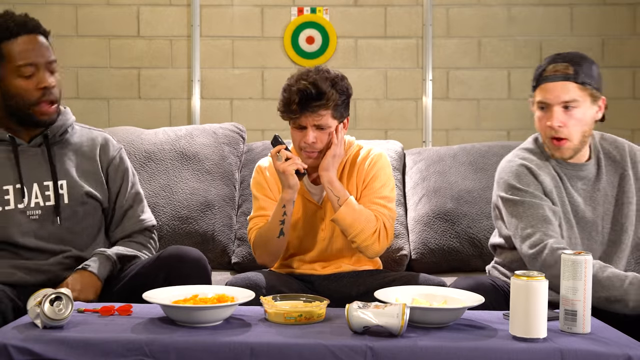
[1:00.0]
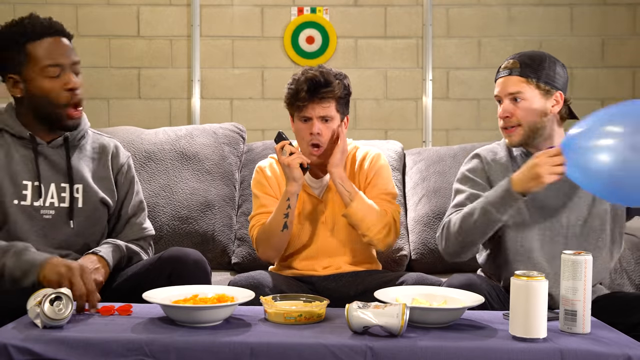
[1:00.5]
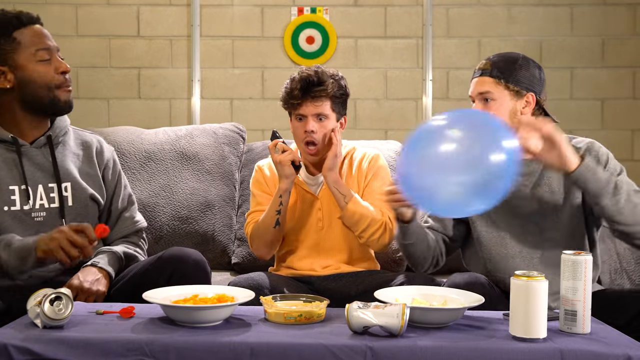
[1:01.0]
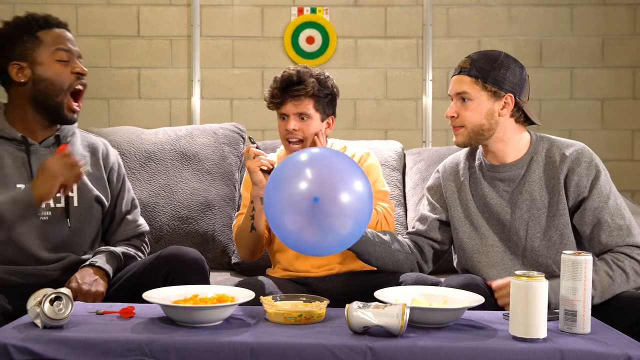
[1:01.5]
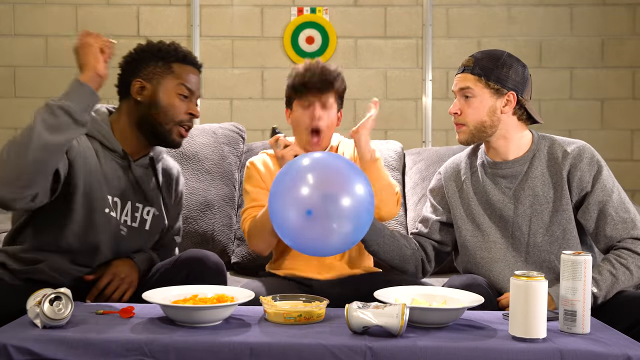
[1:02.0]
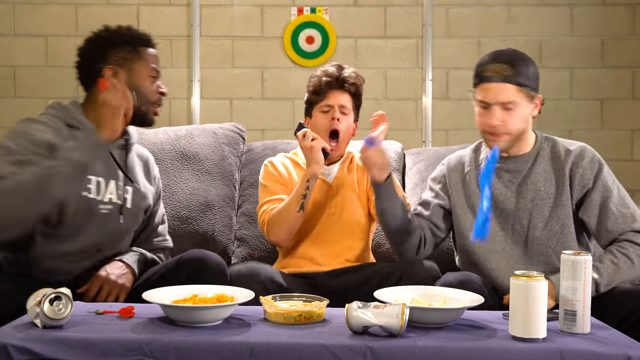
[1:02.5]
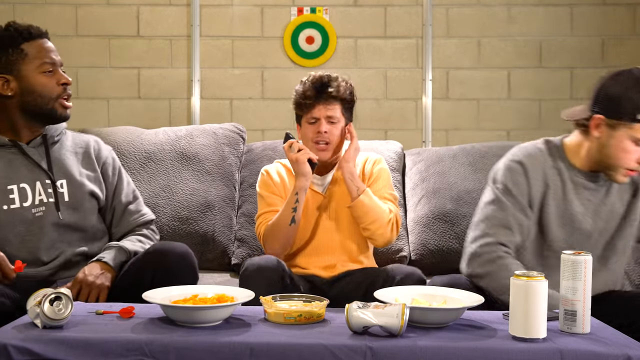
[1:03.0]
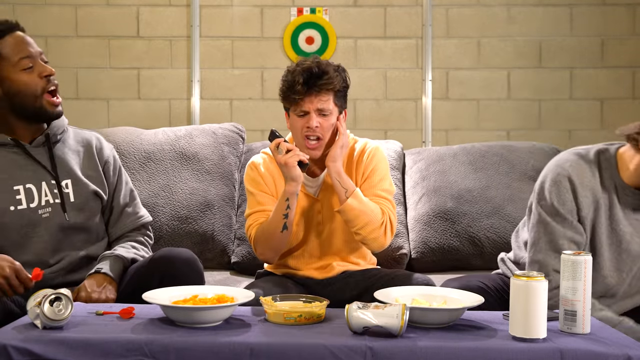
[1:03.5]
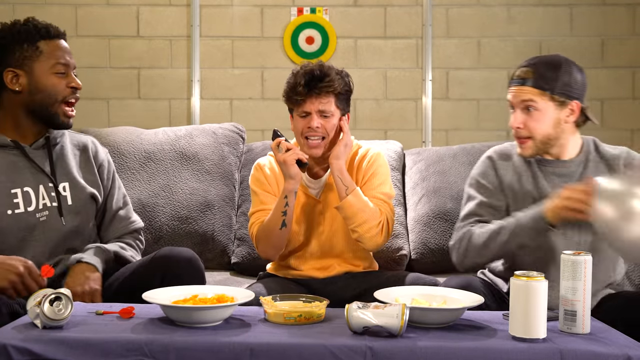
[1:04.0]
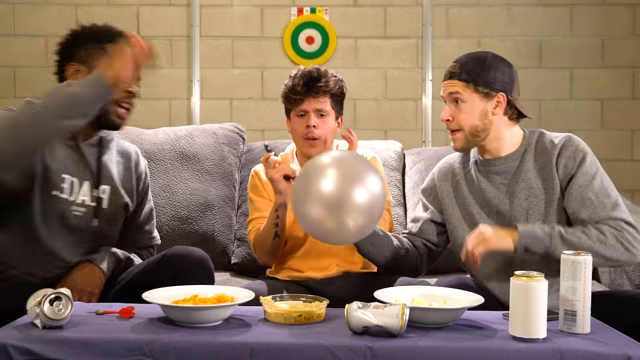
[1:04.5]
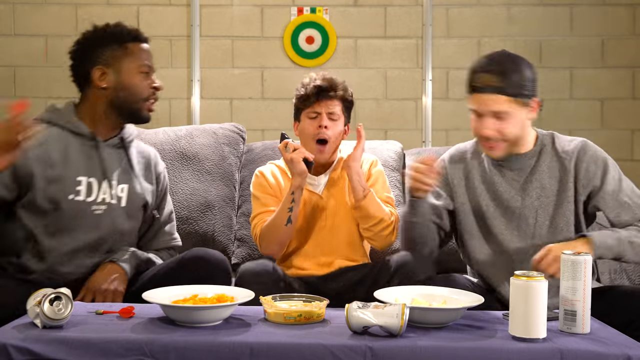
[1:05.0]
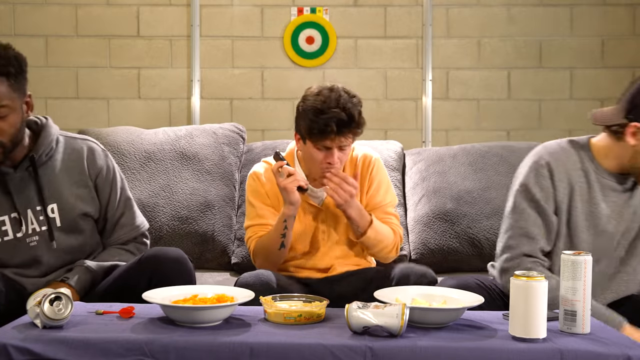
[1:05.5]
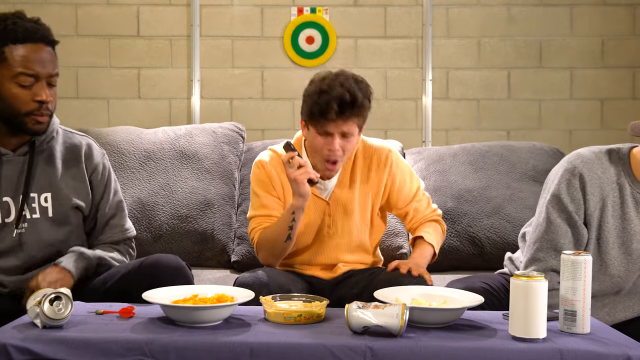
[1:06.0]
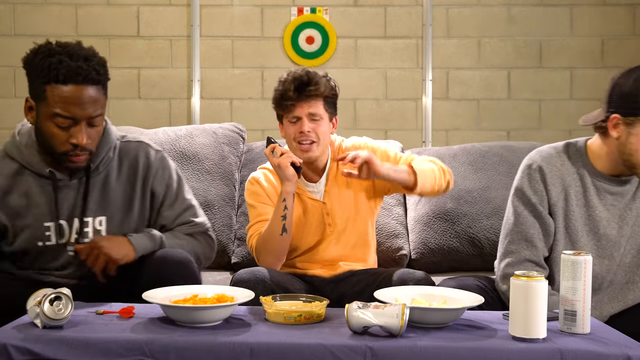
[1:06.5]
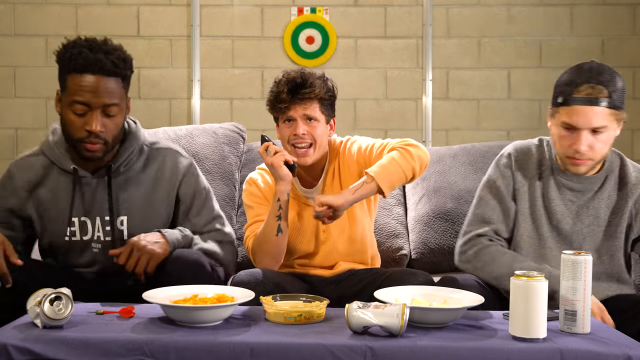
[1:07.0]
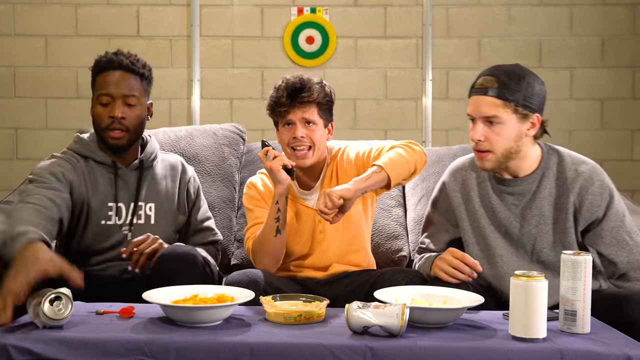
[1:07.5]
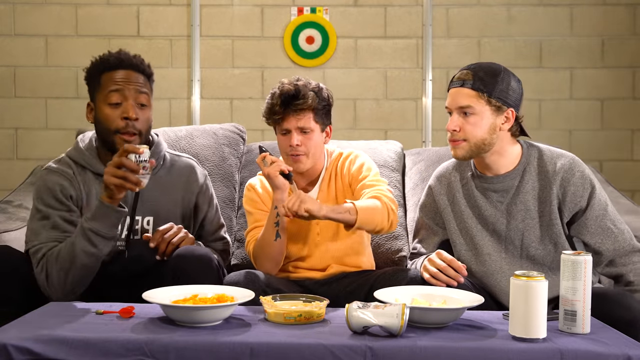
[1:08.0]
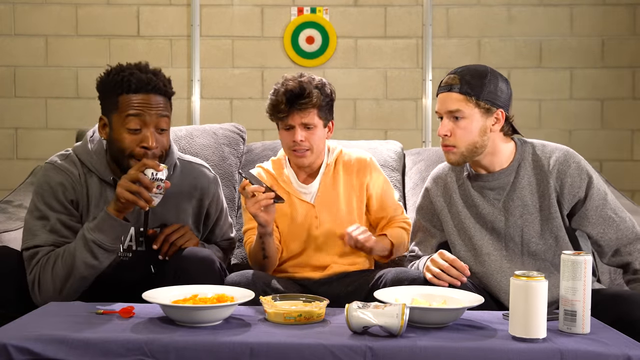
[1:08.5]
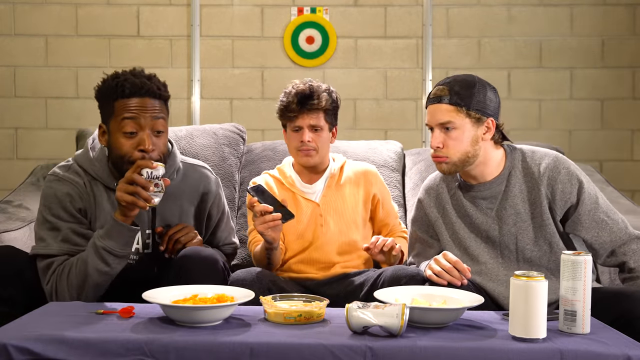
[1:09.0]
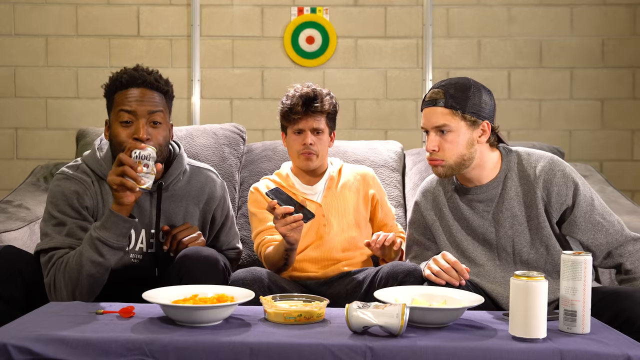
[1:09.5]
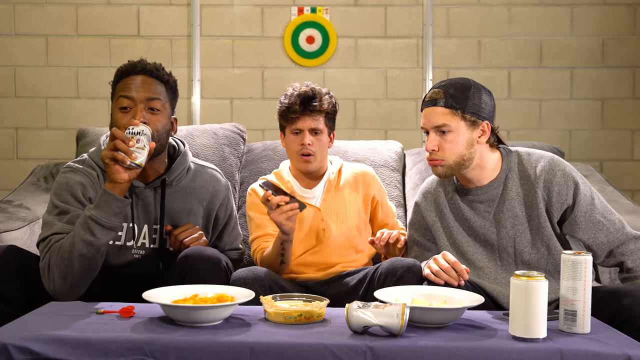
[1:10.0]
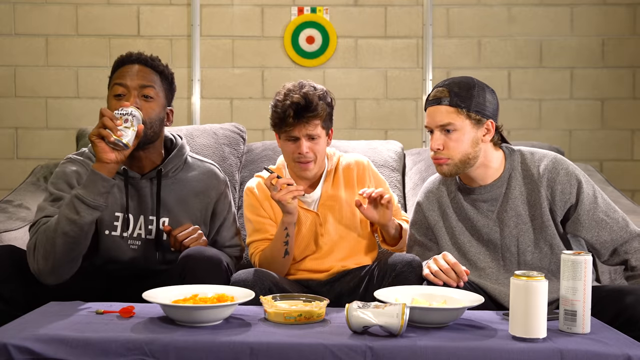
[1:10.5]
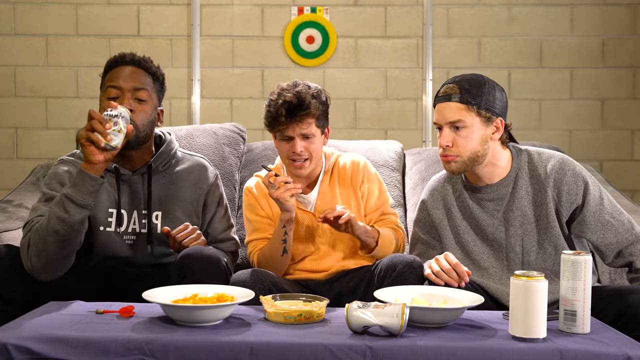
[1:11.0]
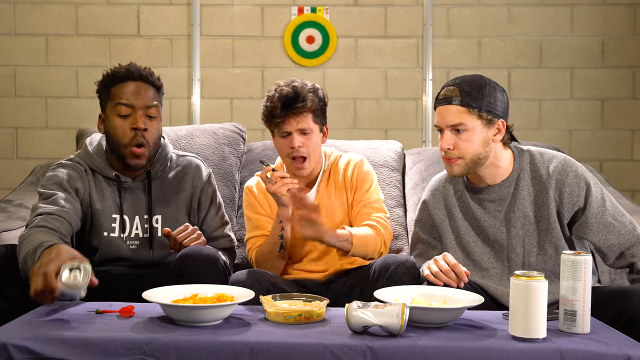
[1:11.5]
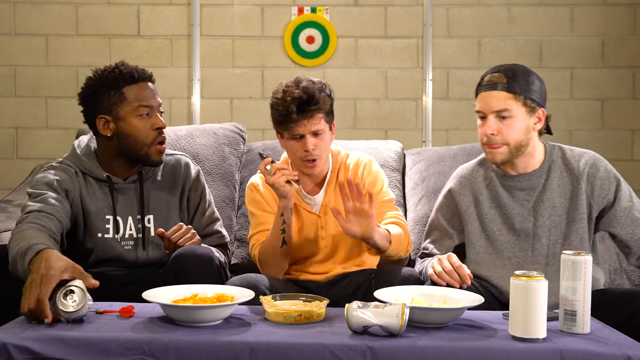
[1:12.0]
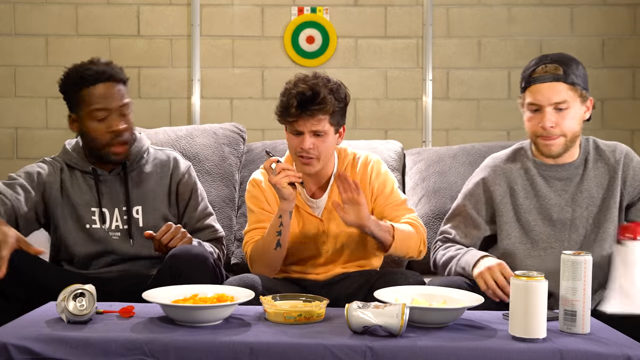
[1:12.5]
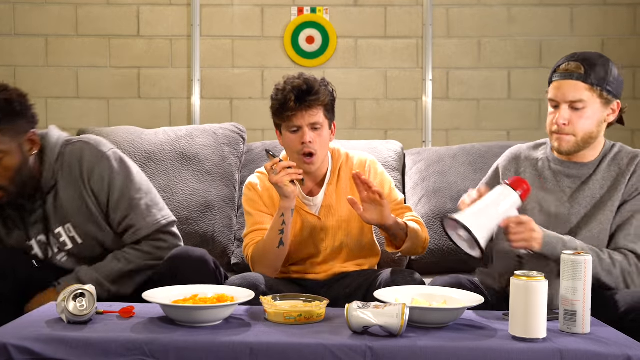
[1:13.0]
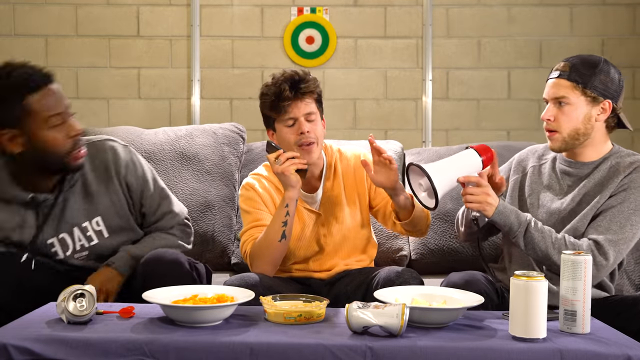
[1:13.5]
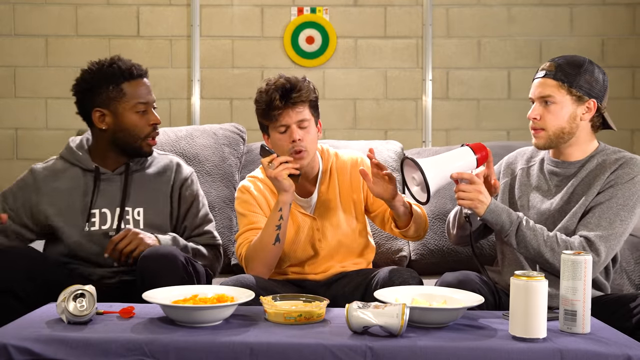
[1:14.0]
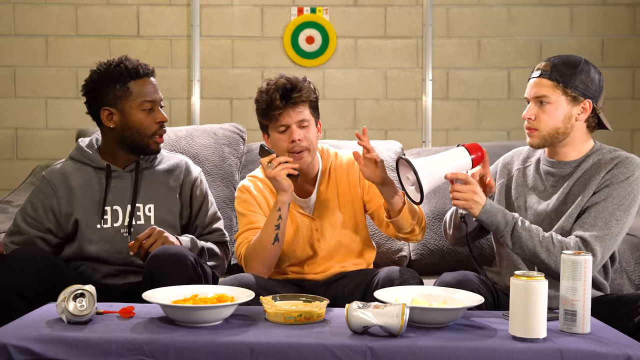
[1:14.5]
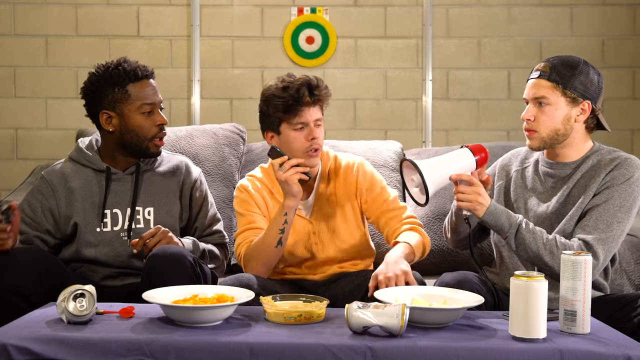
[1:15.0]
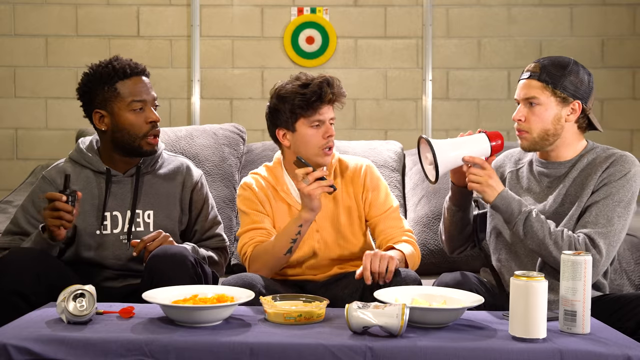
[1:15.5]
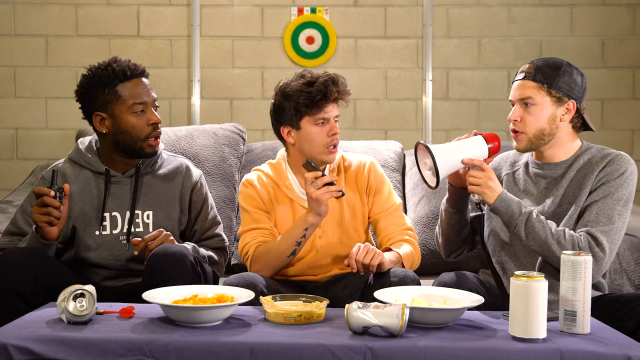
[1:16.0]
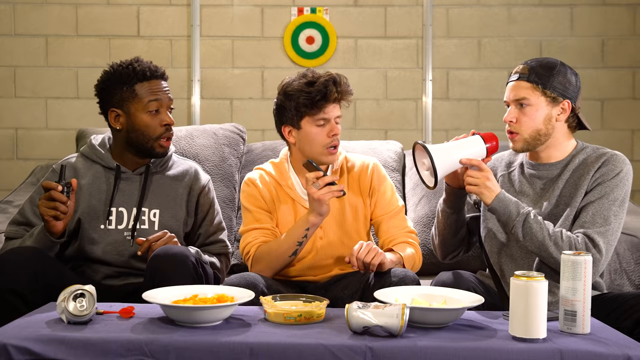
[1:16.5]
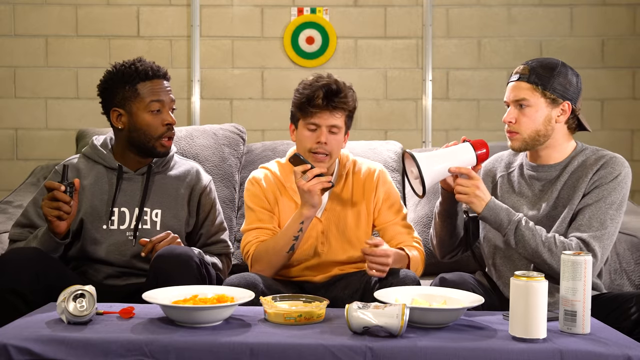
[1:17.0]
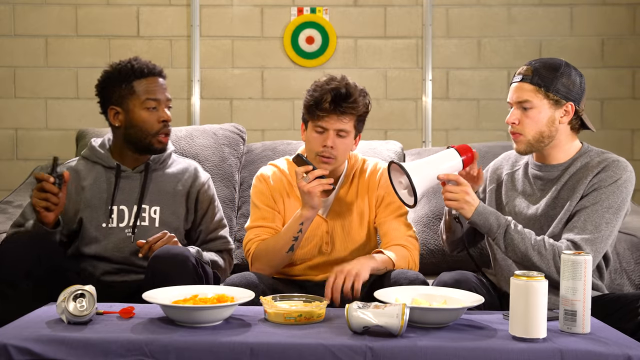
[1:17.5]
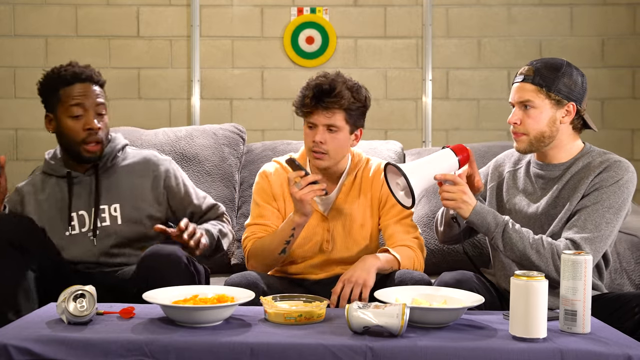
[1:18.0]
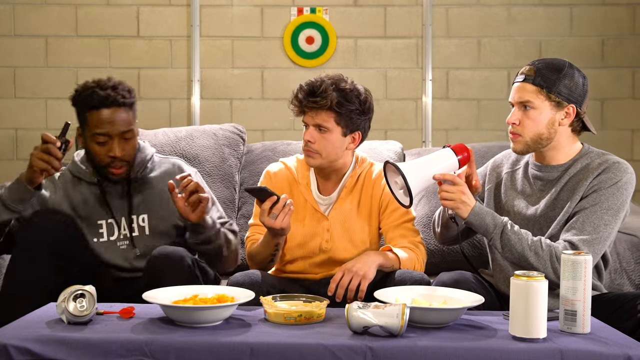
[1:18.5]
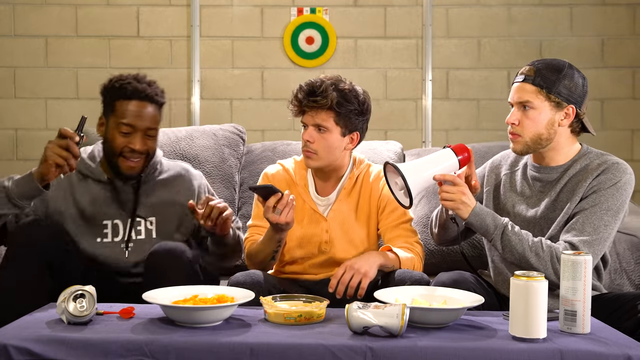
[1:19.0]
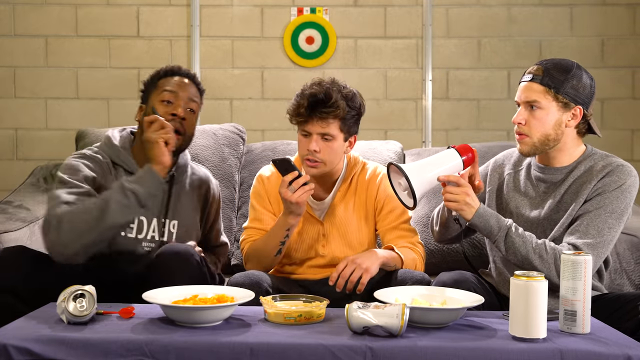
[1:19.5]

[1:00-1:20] From the same point of view, the men keep making as much noise as possible. The man on the right picks up a couple of balloons, a purple one and then a gray one, and the man on the left pops them over the man in the middle, who is still on the phone; every time a balloon pops, the man in the middle jumps. Then the black man on the left picks up a crumpled can and almost looks like he breathes or drinks from it, even though it looks empty. The man on the right then picks up a white and red megaphone, while the man on the left picks up what looks like a walkie-talkie. The man in the middle is still trying to hold a conversation as both men make noise. When the man gets on the megaphone, he seems to be annoyed.